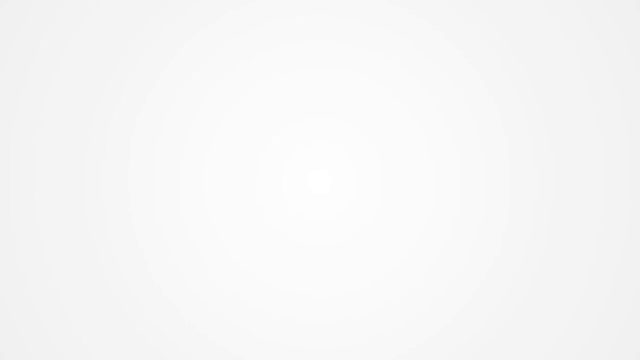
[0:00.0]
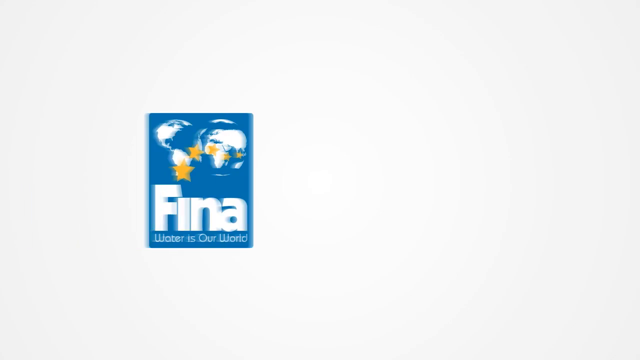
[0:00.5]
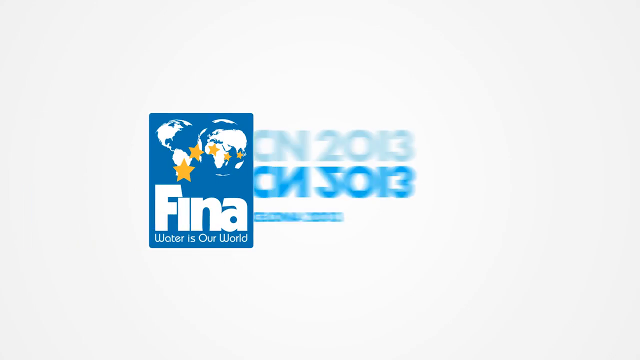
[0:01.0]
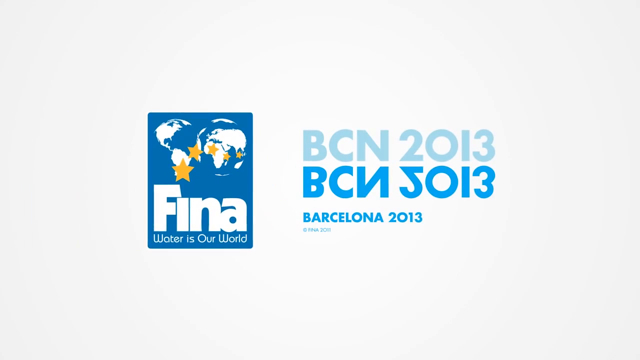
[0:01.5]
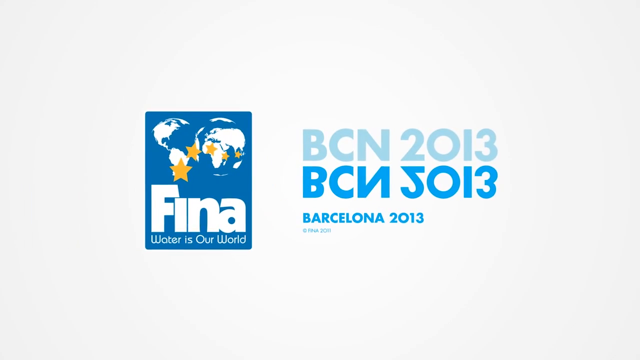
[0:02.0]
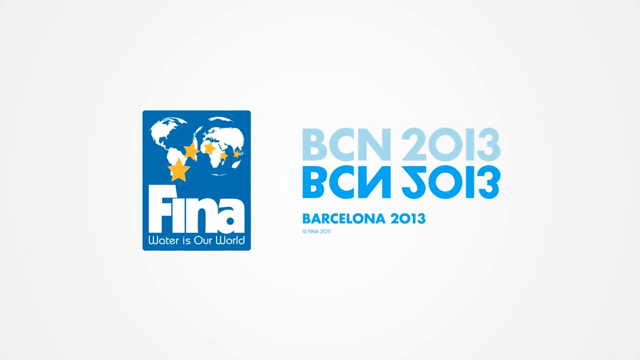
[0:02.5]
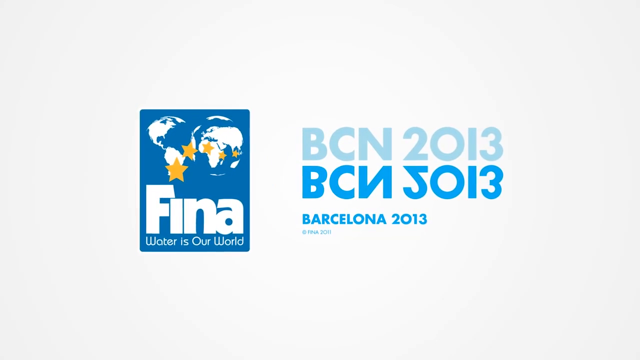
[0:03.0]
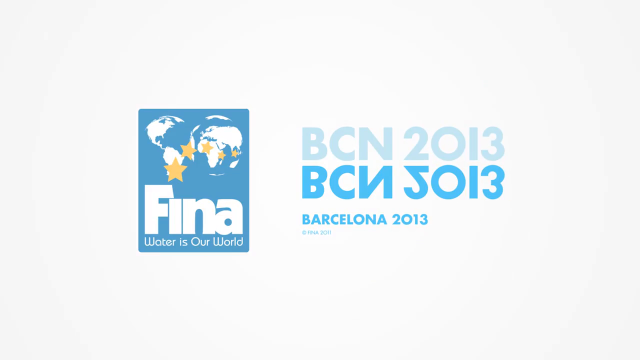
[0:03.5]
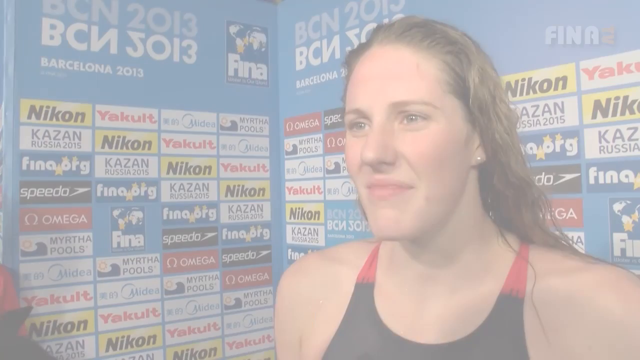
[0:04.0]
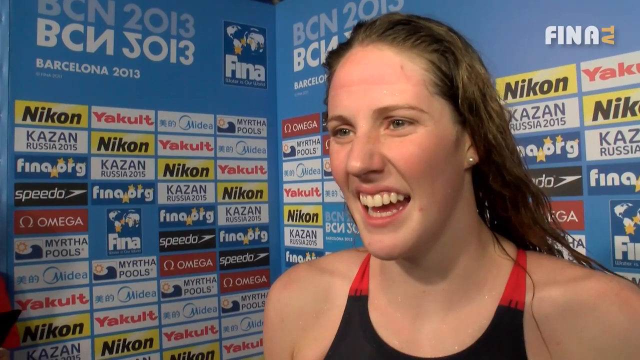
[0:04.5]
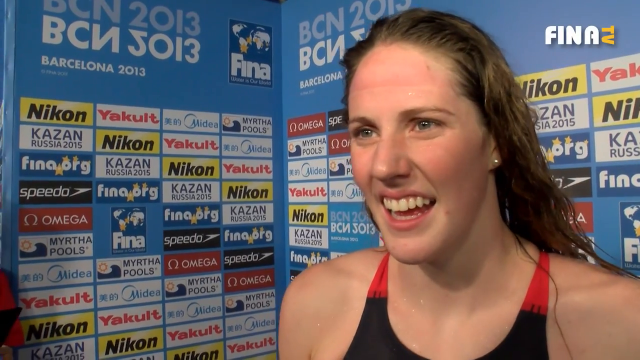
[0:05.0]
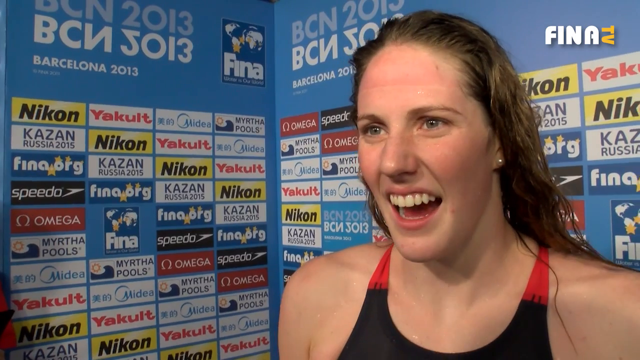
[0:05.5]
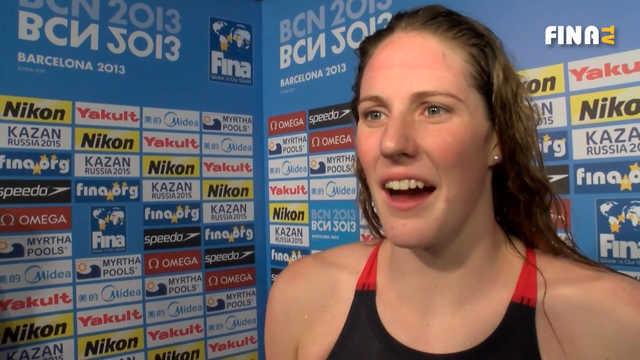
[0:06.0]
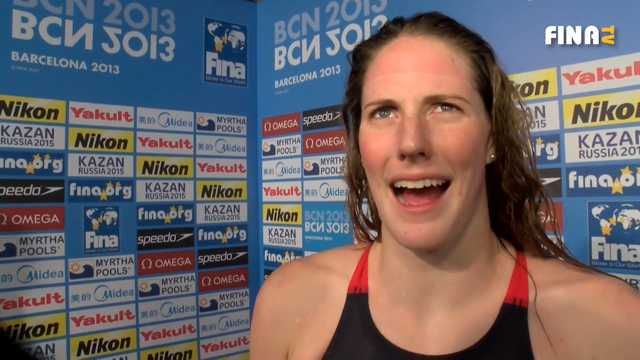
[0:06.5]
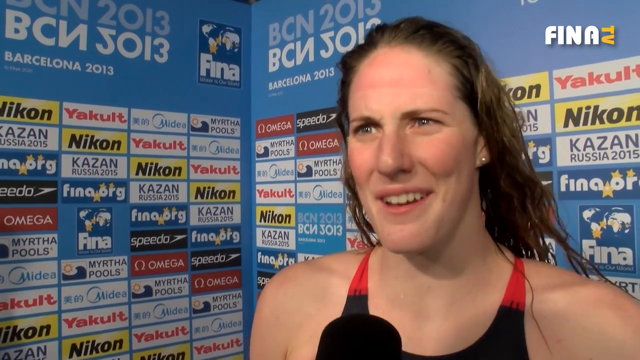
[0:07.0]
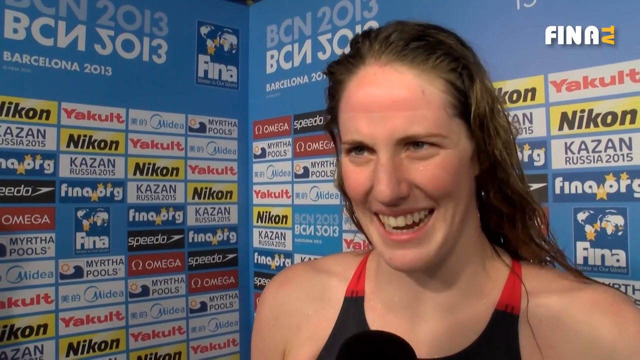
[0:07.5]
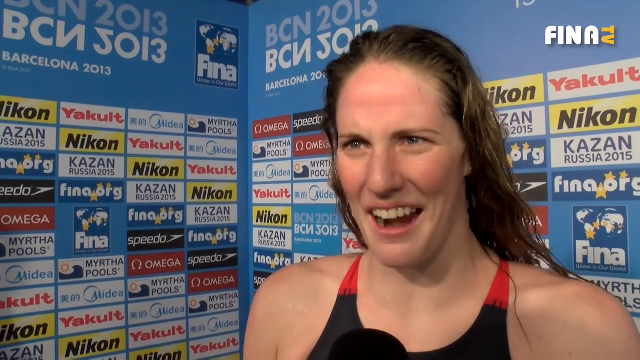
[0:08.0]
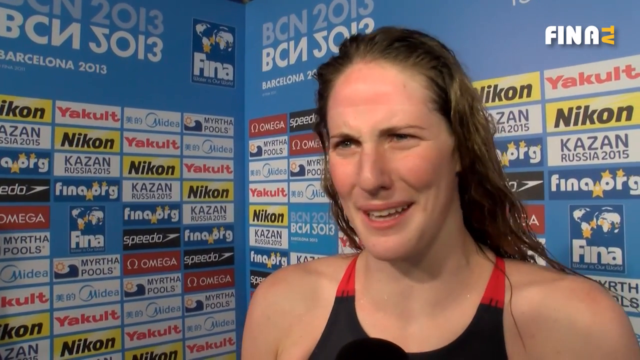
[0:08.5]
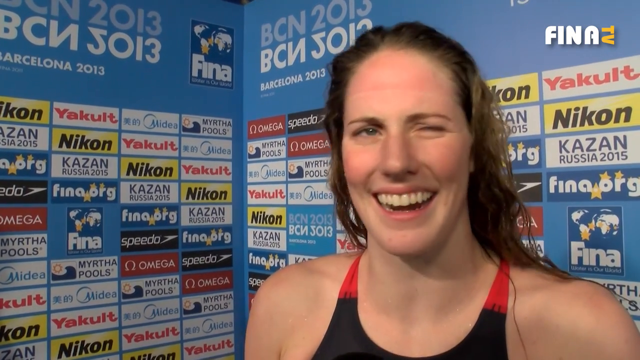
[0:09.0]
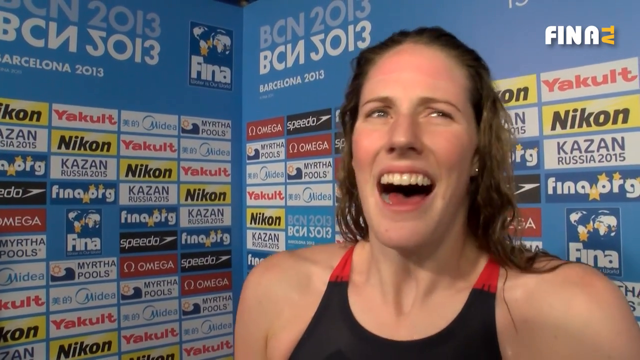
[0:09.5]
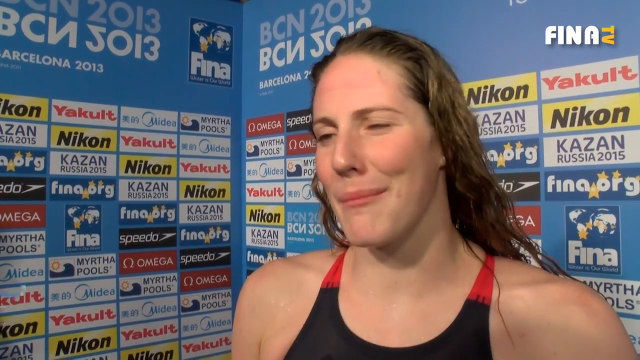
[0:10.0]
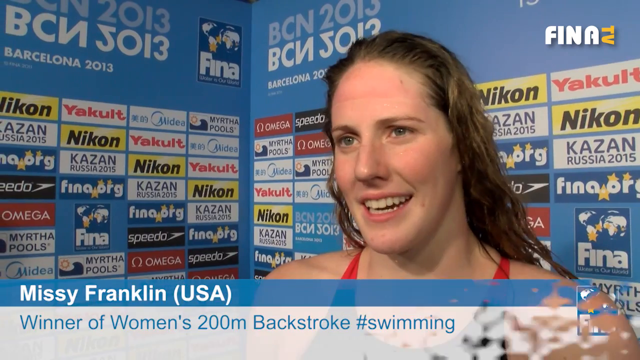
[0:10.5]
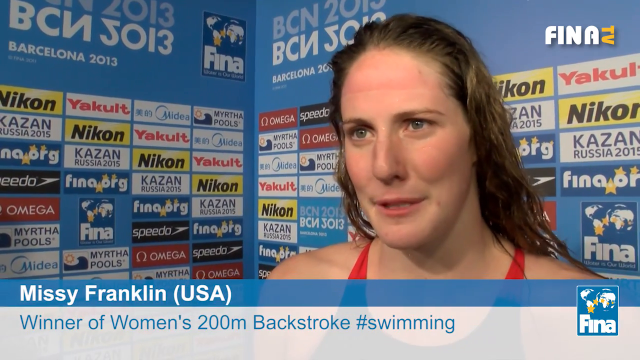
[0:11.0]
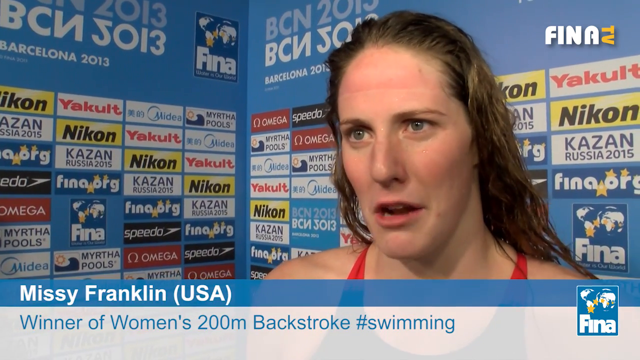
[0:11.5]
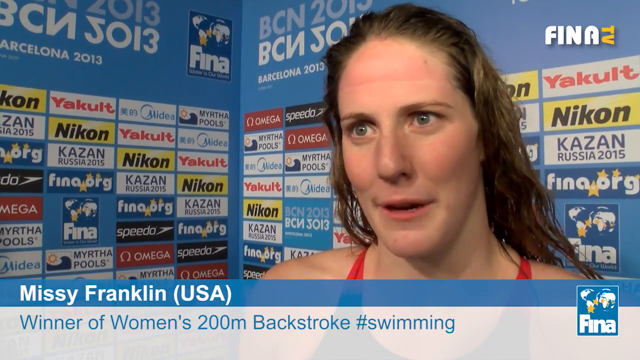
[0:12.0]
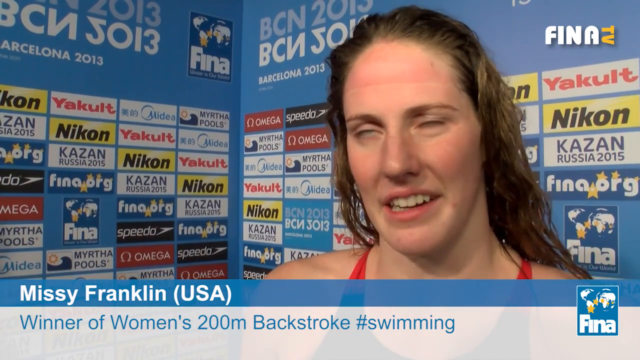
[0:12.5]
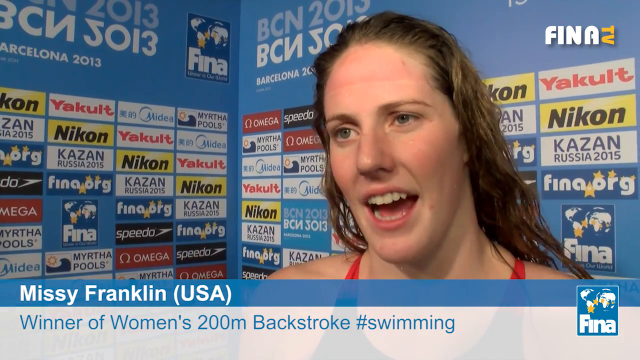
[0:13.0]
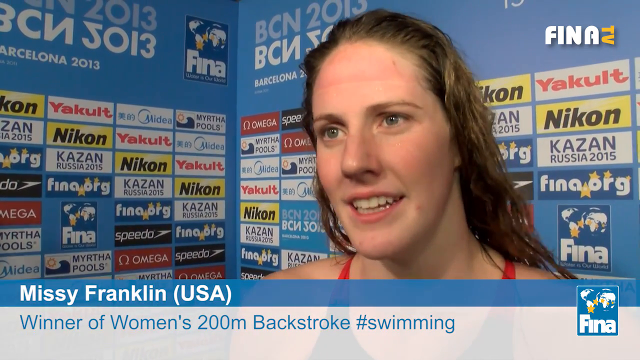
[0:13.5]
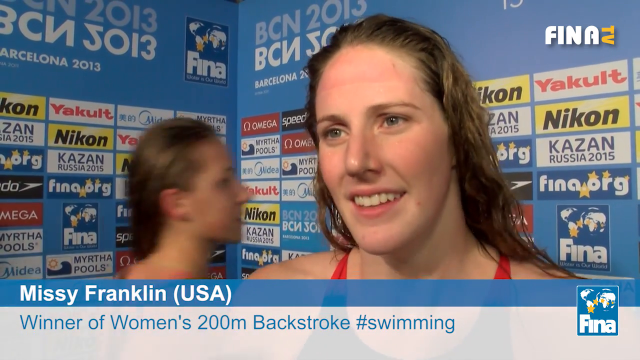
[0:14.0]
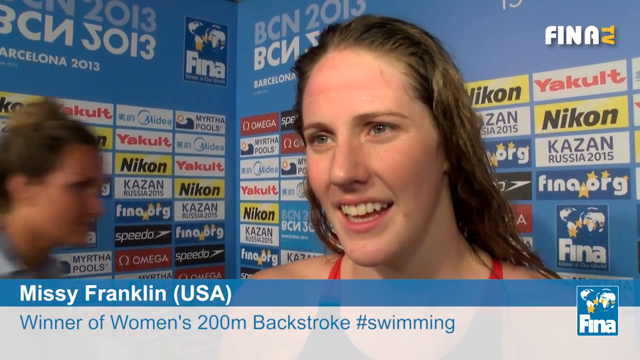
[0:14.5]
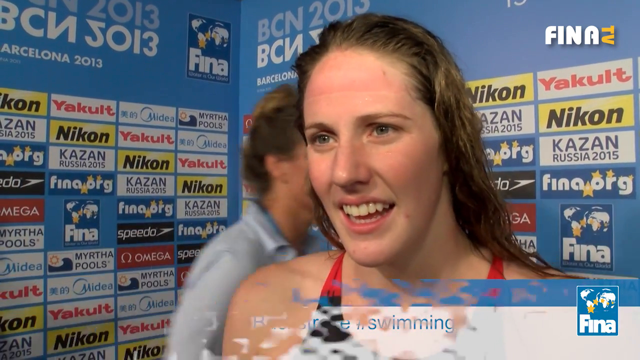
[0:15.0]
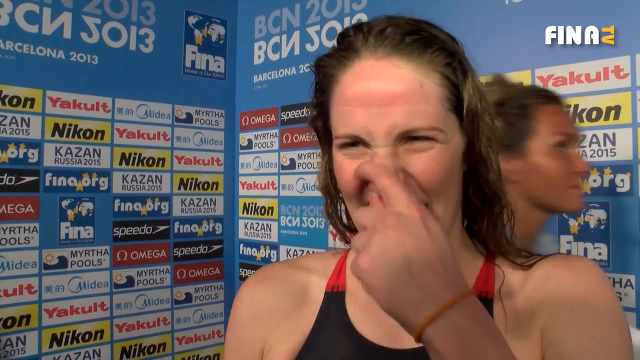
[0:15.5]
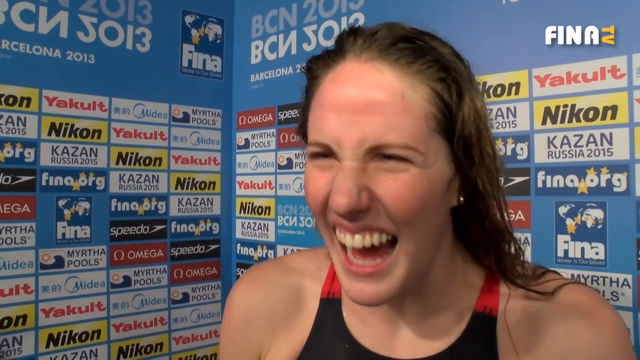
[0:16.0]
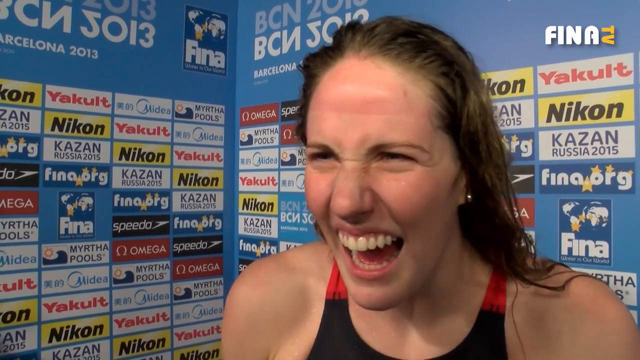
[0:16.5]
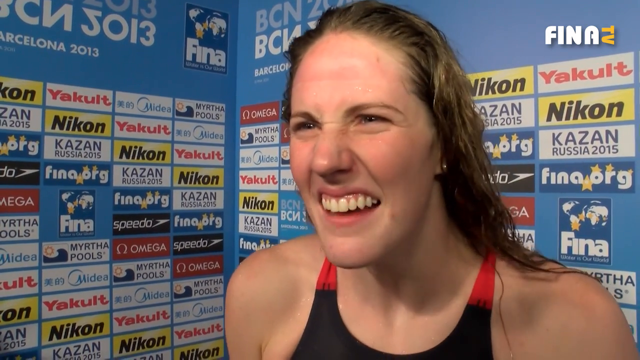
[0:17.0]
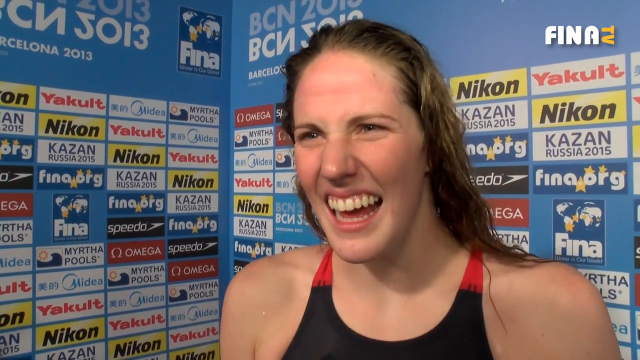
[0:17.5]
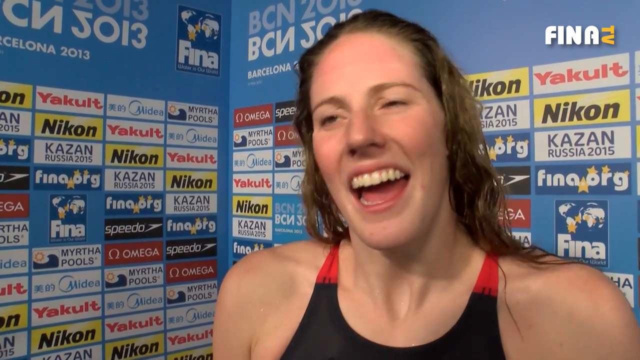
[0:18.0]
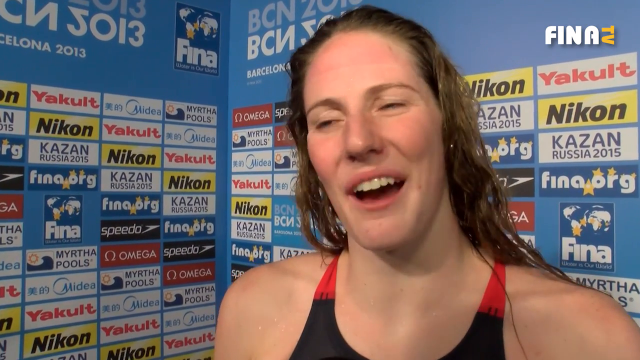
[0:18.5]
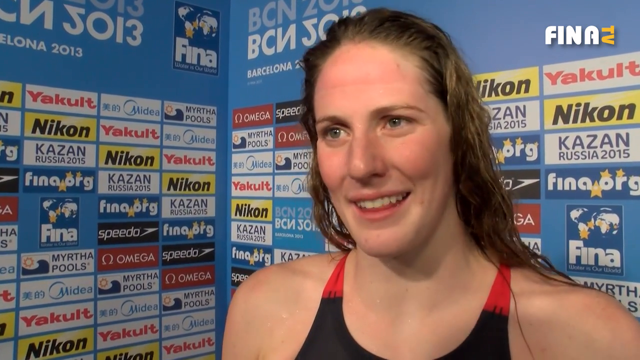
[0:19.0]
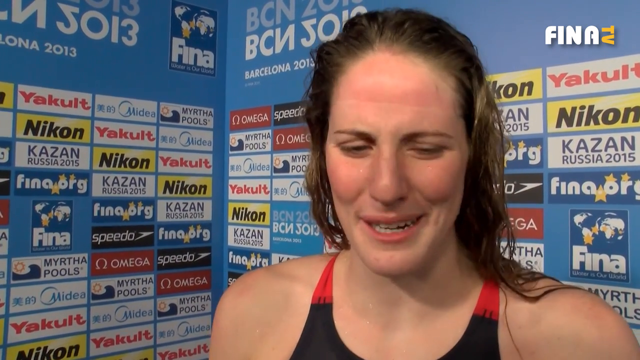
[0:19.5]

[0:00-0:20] The video begins with a plain white screen, followed by an introduction showing logos for FINA, "Water Is Our World," and "BCN 2013," Barcelona 2013. It then switches to a woman with long brown hair and brown eyes, wearing a red bathing suit and simple earrings. She stands in front of an interview station displaying many sponsors for the event, smiling as she is interviewed with a microphone. She is identified as Missy Franklin from the USA, the winner of the women's 200 meter backstroke, along with "#swimming." Some people walk behind her. She looks very happy, talking gleefully to the camera, and seems pleased with her performance. Sponsors in the background include Nikon, Kazan, a pool company, and other media and technology groups.